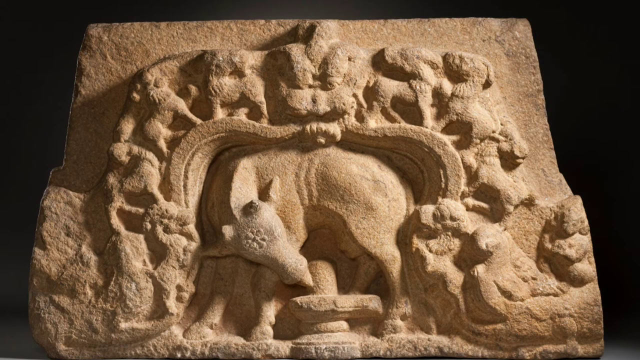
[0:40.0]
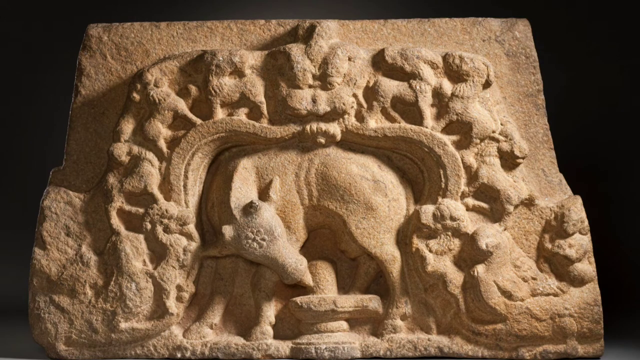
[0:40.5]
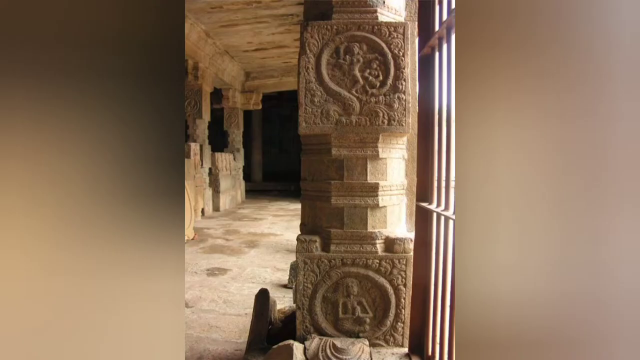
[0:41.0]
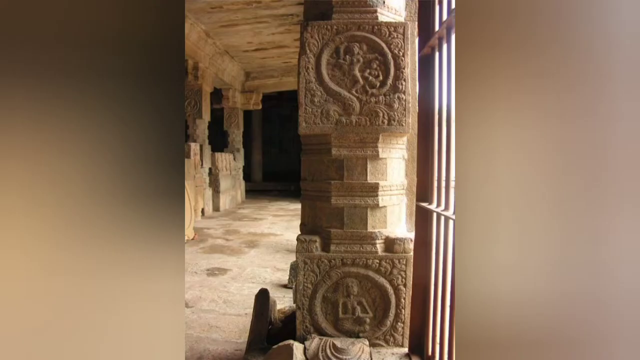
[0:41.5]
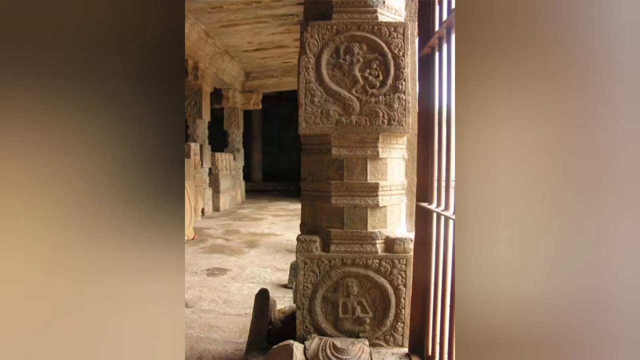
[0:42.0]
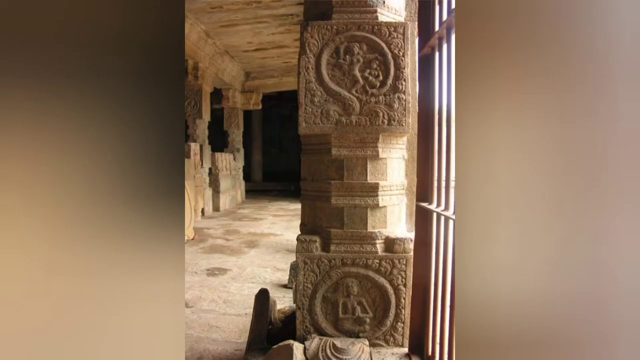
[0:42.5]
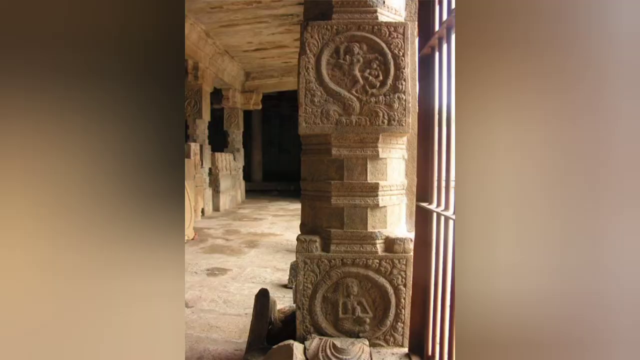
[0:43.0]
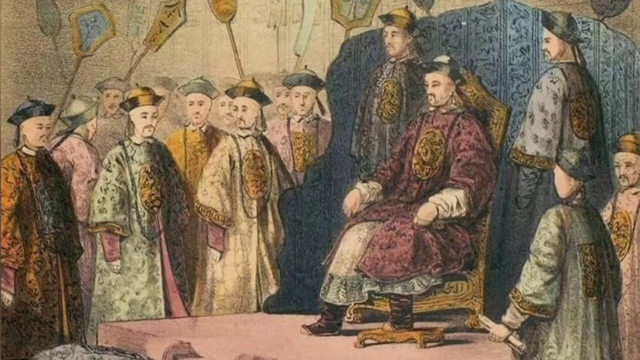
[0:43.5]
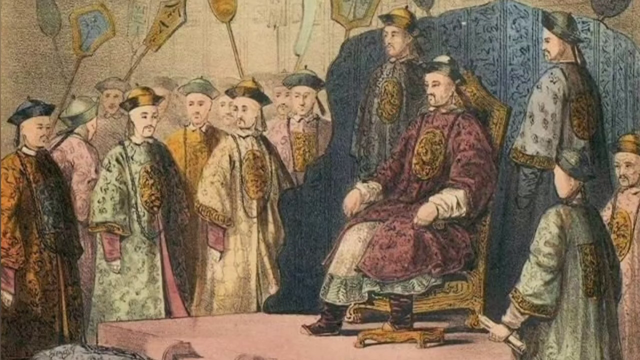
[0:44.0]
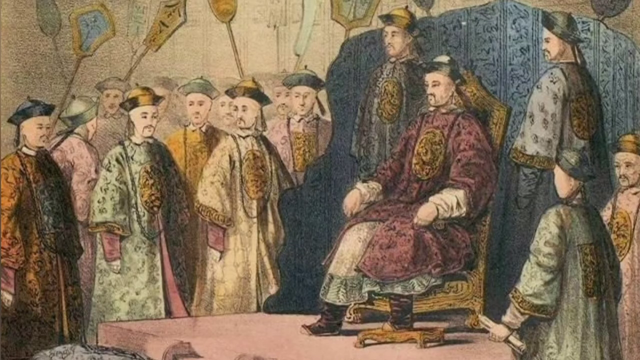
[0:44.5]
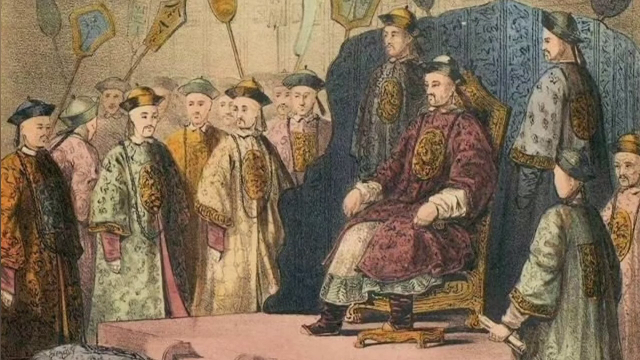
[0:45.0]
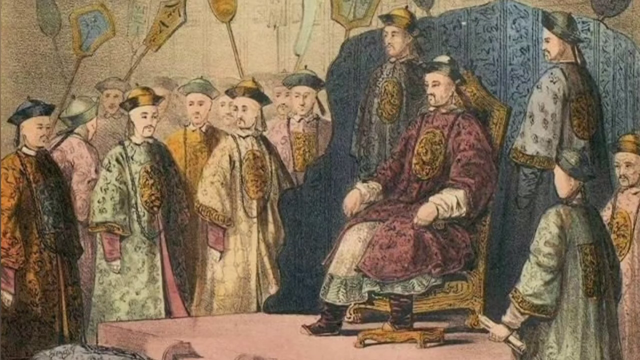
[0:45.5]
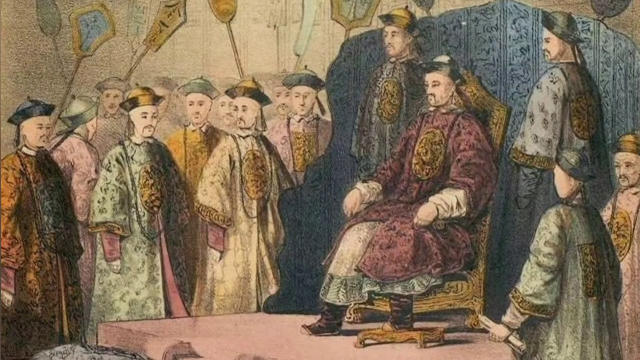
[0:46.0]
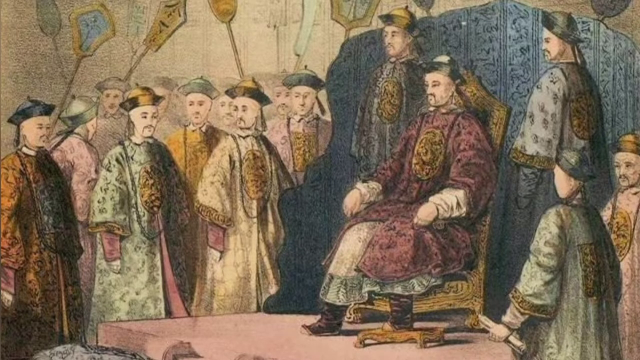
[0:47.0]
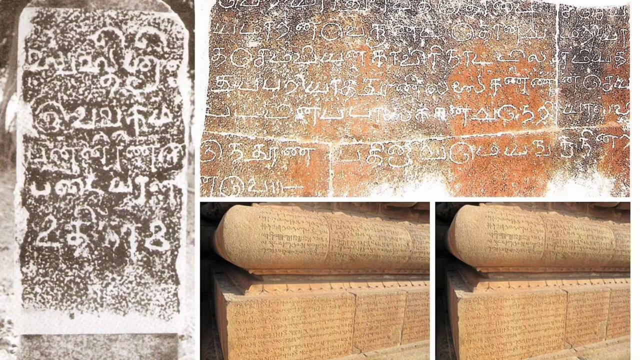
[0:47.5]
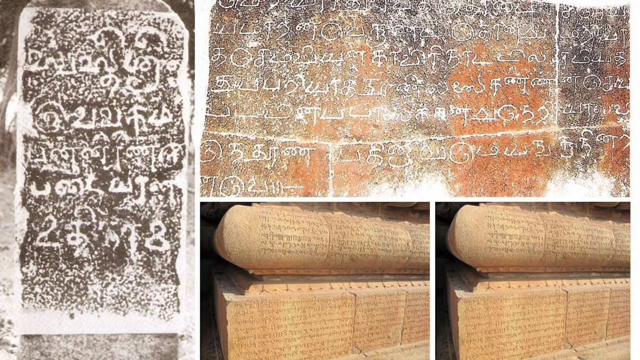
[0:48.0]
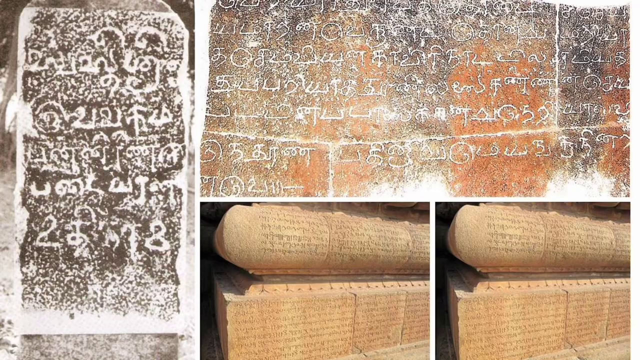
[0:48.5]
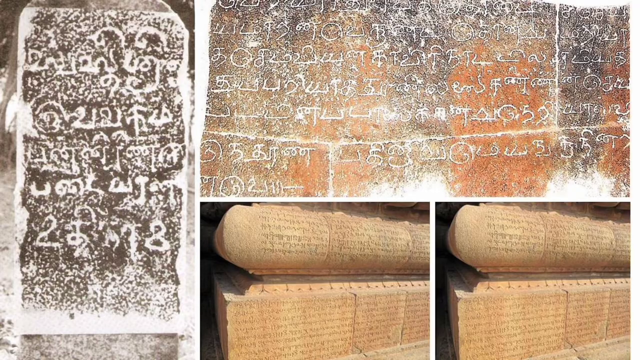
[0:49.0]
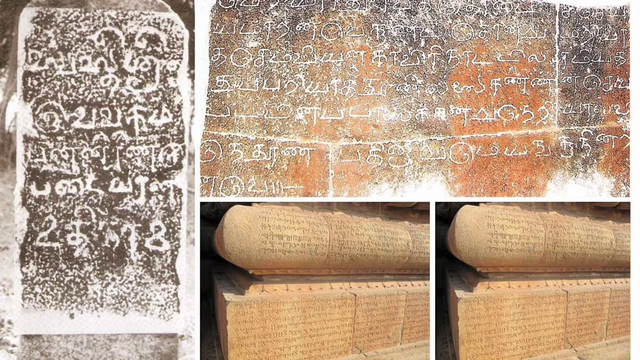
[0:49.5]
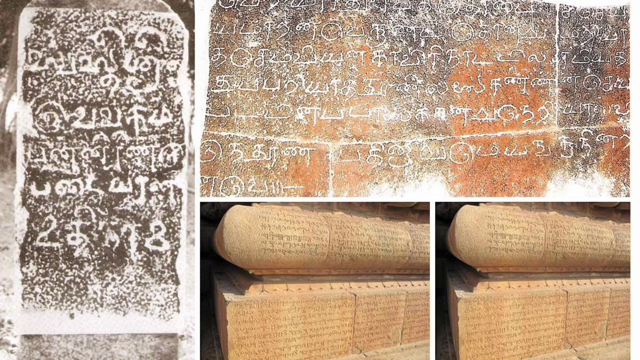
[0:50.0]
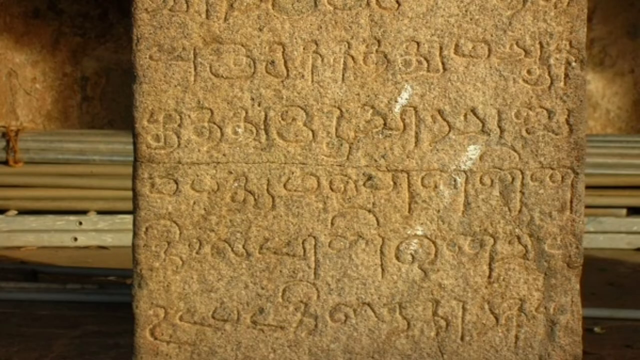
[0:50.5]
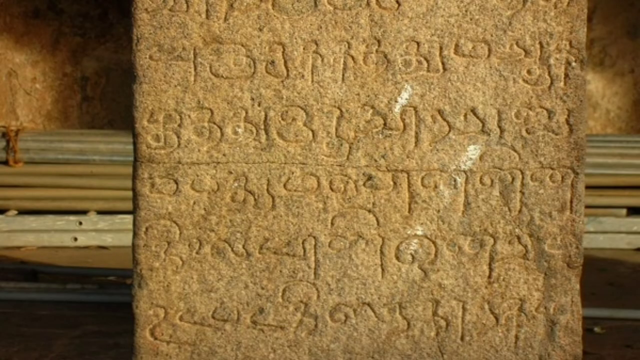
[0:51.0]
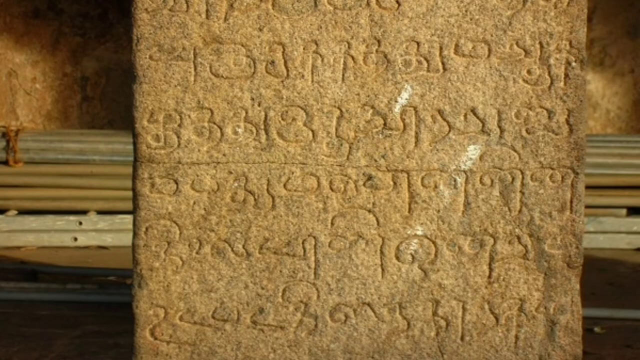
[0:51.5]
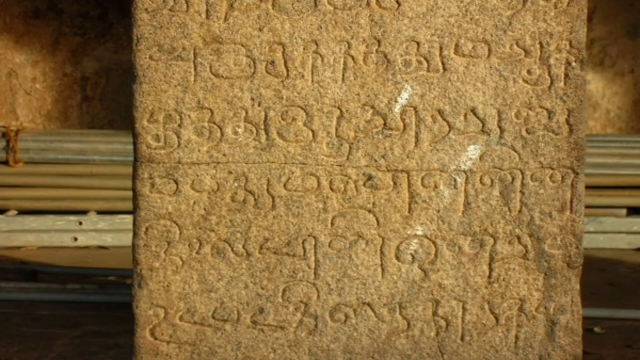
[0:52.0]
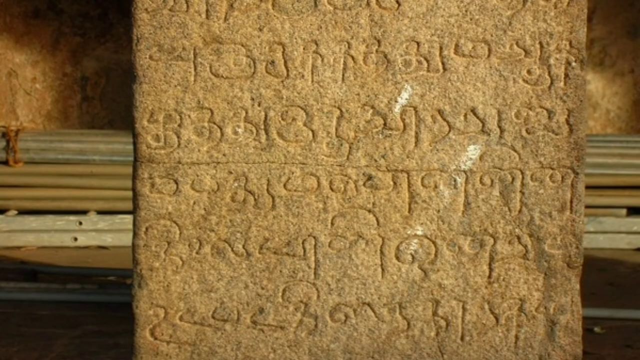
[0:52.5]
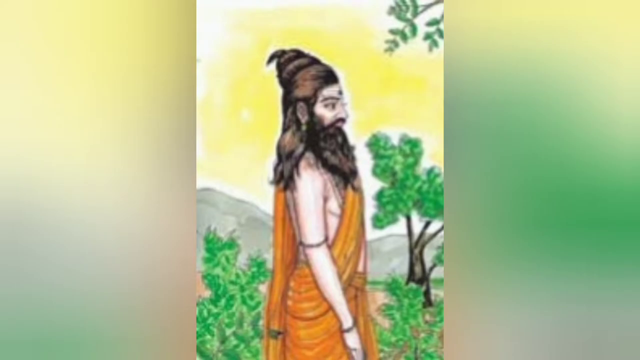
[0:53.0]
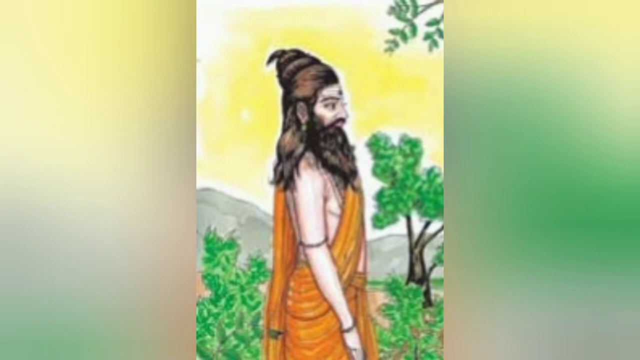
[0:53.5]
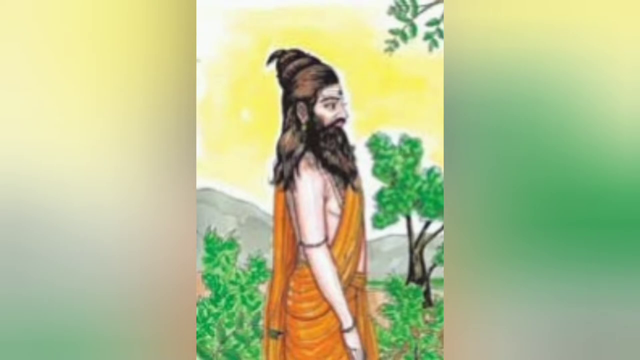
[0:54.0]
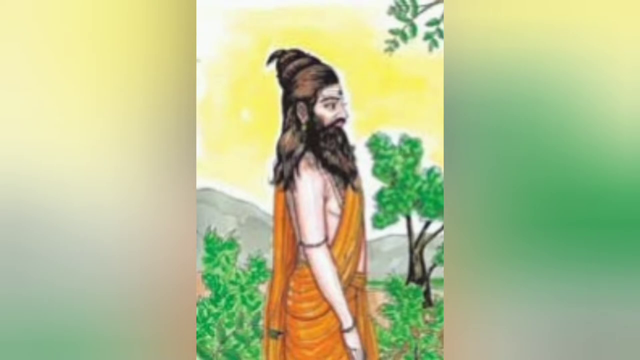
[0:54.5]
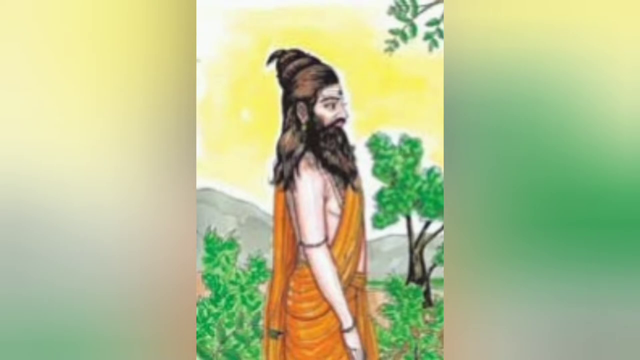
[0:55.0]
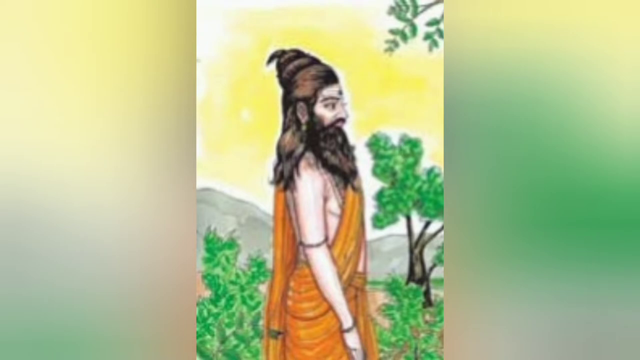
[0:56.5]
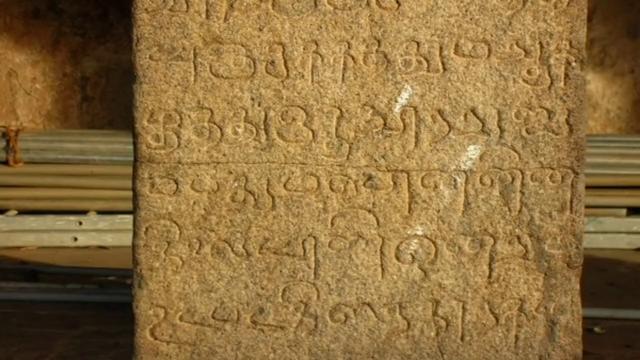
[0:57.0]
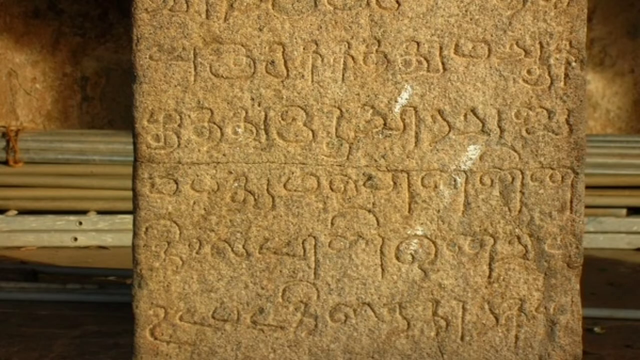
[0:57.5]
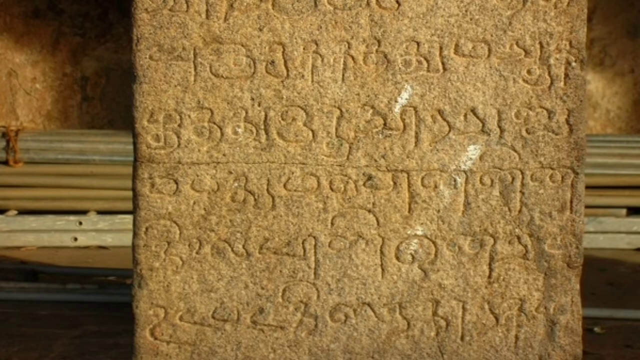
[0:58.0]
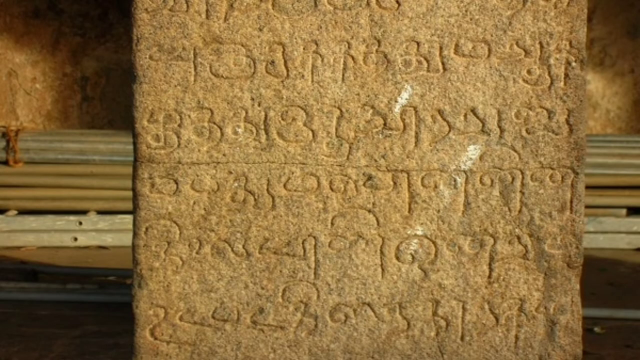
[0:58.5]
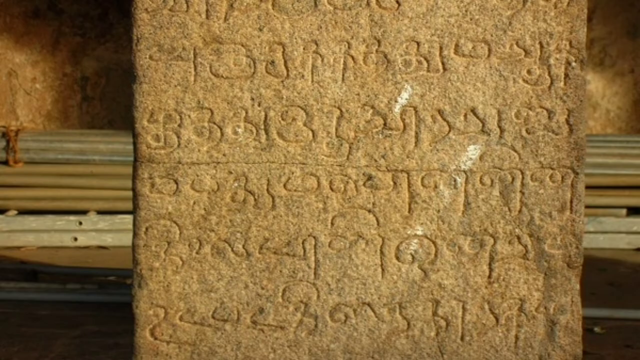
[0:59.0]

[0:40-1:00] Inscriptions on walls are shown. Then what appears to be a Chinese emperor, wearing silk clothes and a black Chinese hat, is surrounded by advisers, about 12 people standing around him. Images of Buddhism follow, including the same tablets seen before, written in an Indian form of script, and the priest in orange robes with very long black hair. The images are close-up and detailed; the first has what looks to be either a deer or a cow surrounded by other animals. The inscriptions are quite ornate.